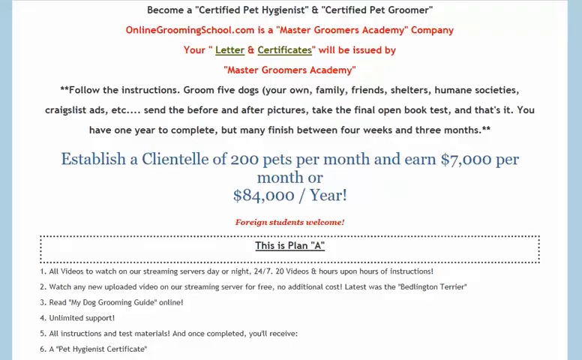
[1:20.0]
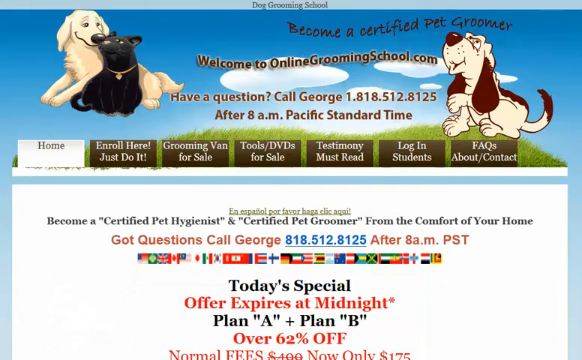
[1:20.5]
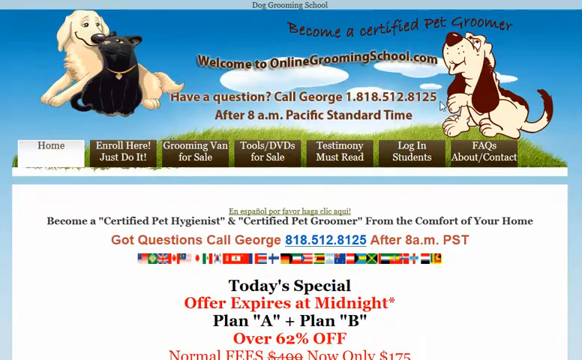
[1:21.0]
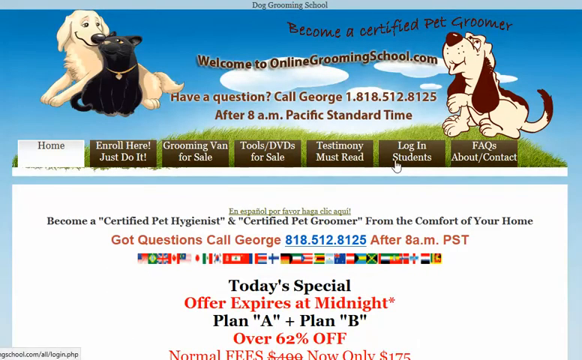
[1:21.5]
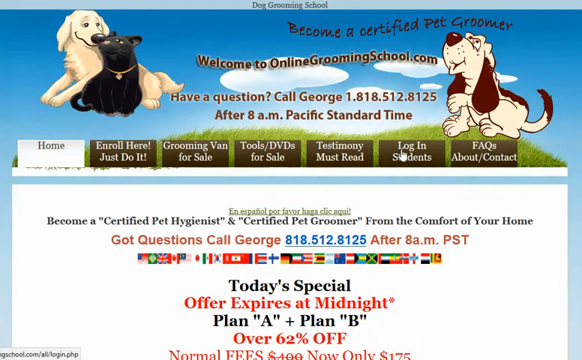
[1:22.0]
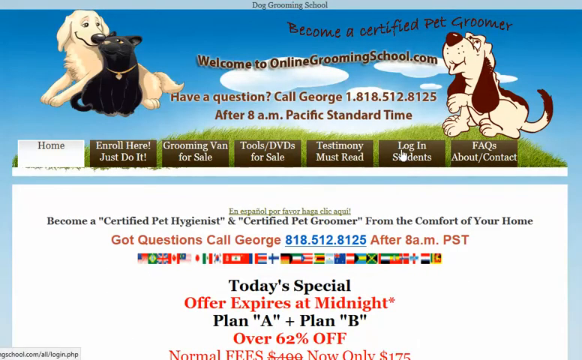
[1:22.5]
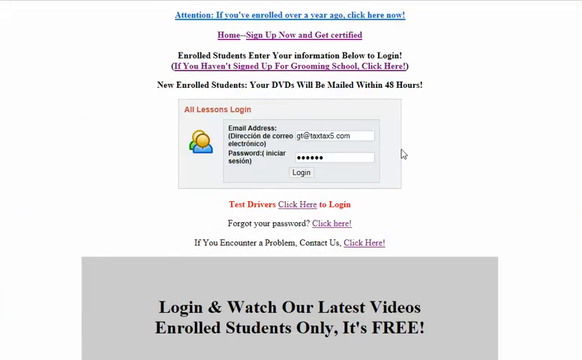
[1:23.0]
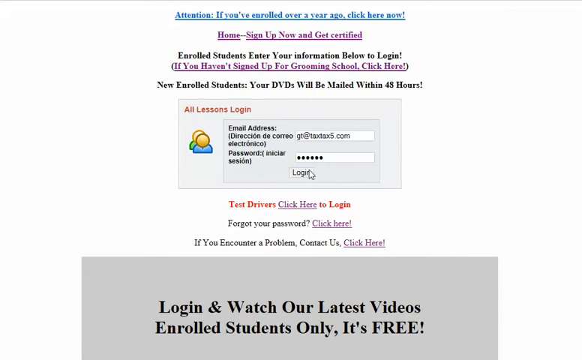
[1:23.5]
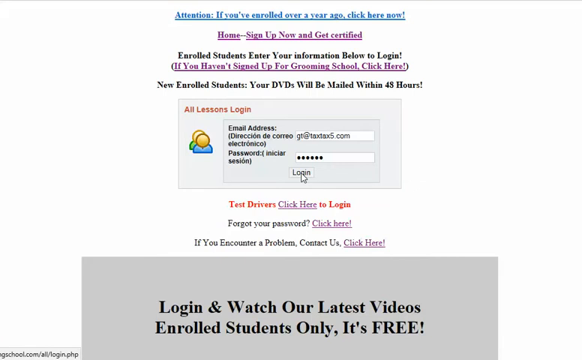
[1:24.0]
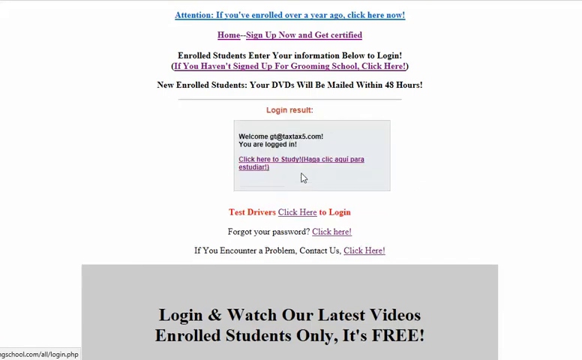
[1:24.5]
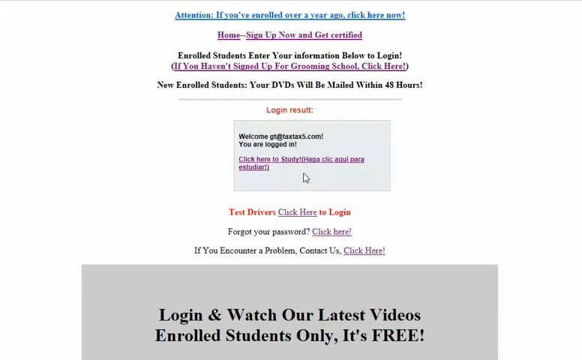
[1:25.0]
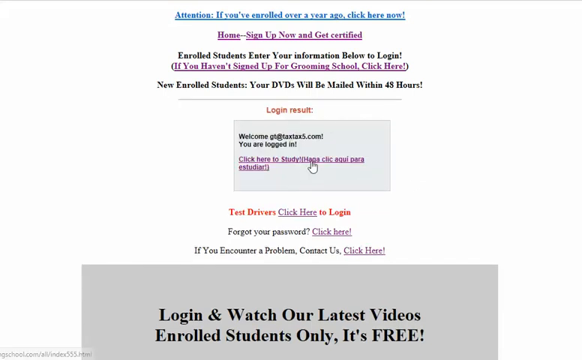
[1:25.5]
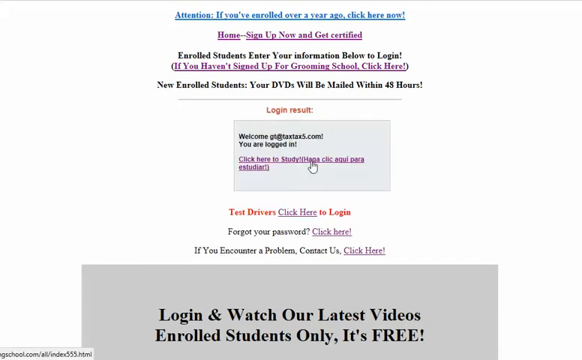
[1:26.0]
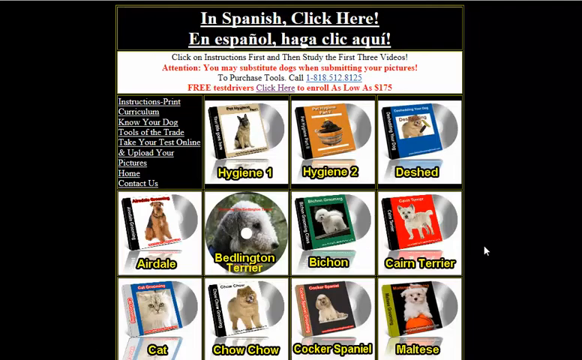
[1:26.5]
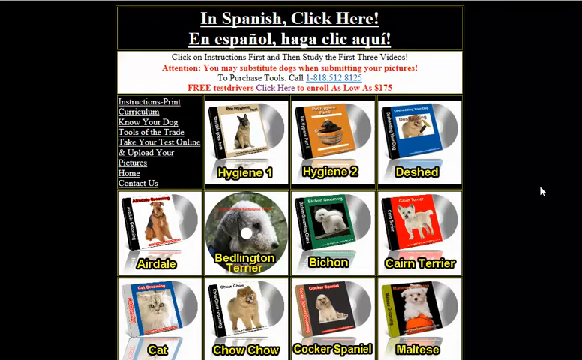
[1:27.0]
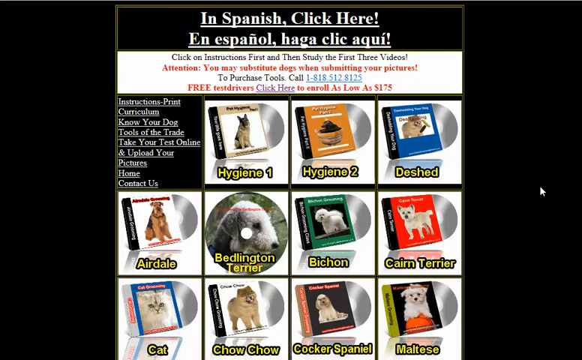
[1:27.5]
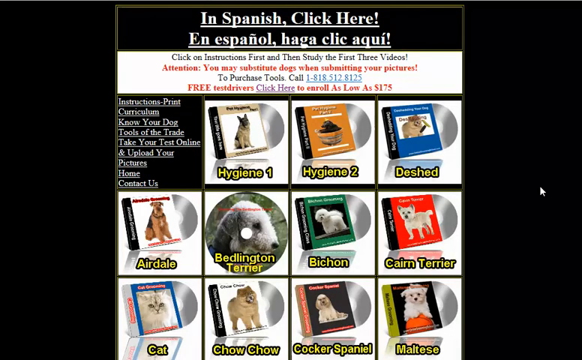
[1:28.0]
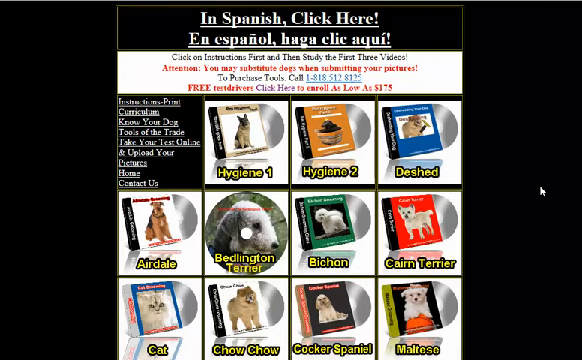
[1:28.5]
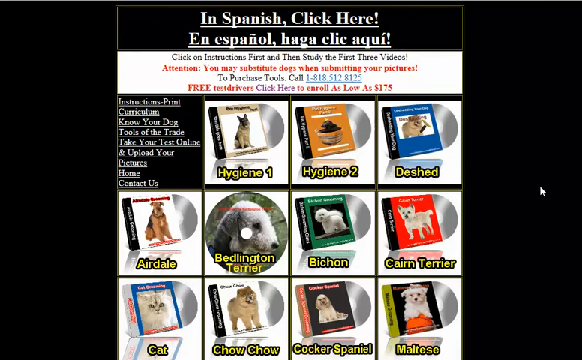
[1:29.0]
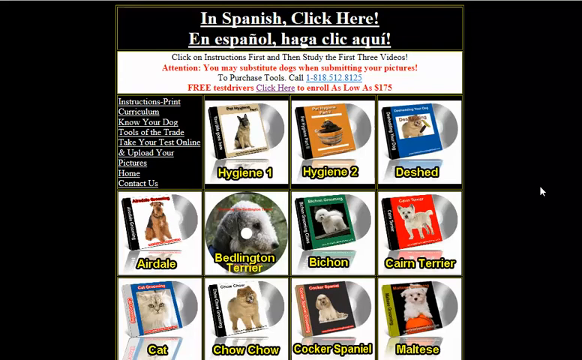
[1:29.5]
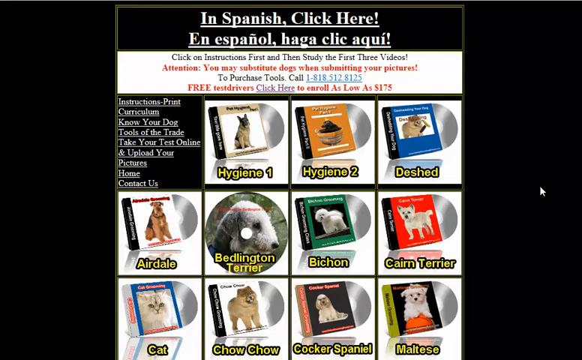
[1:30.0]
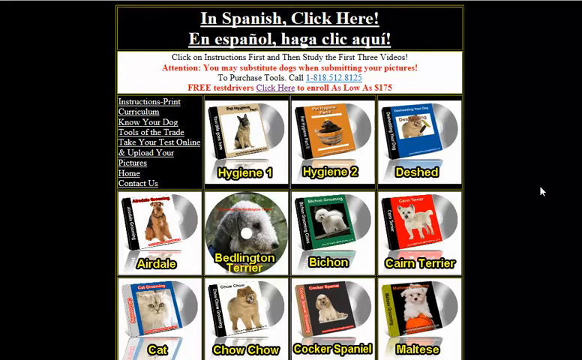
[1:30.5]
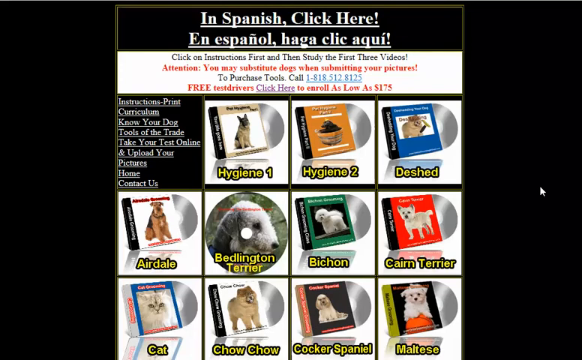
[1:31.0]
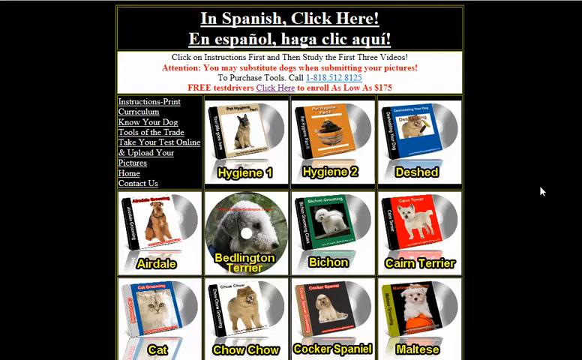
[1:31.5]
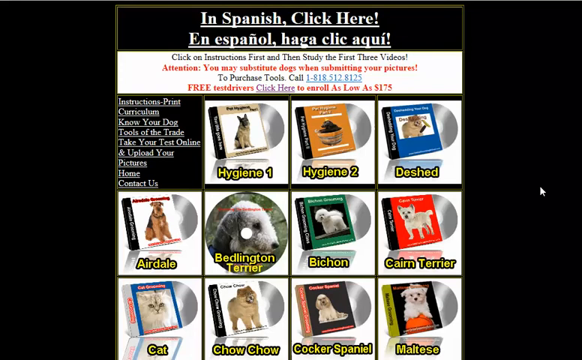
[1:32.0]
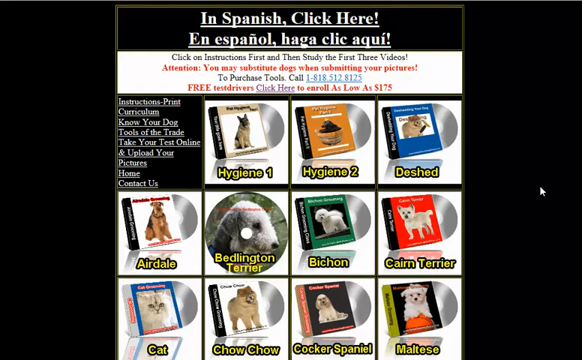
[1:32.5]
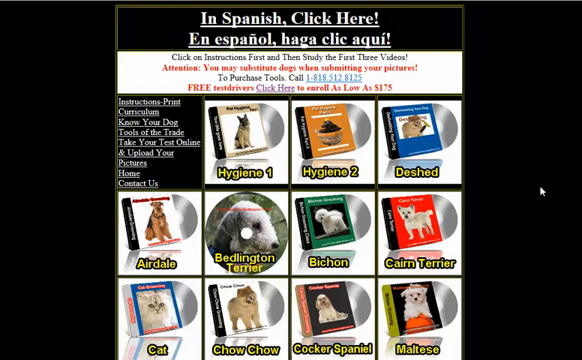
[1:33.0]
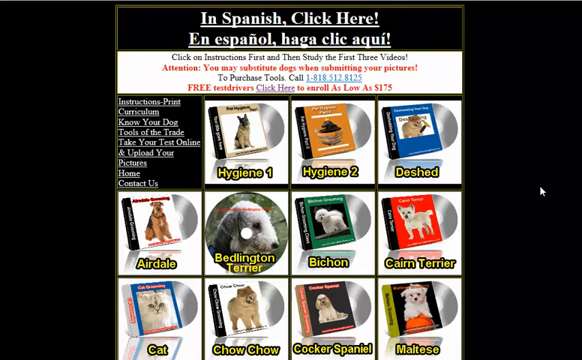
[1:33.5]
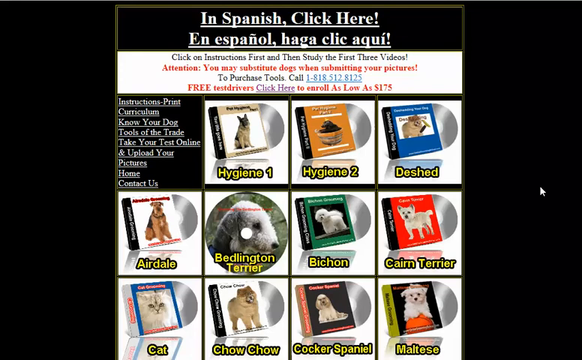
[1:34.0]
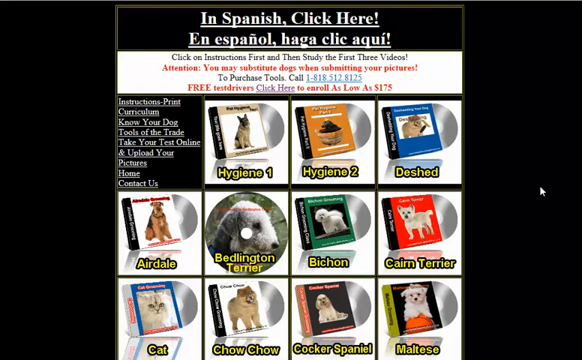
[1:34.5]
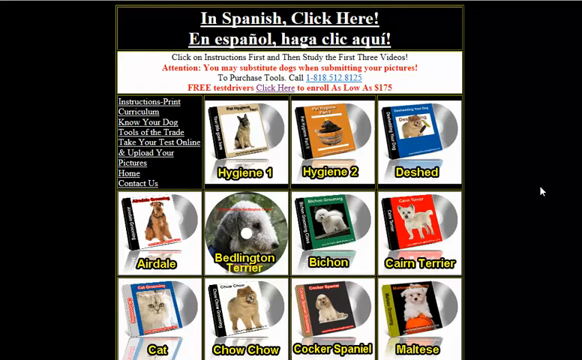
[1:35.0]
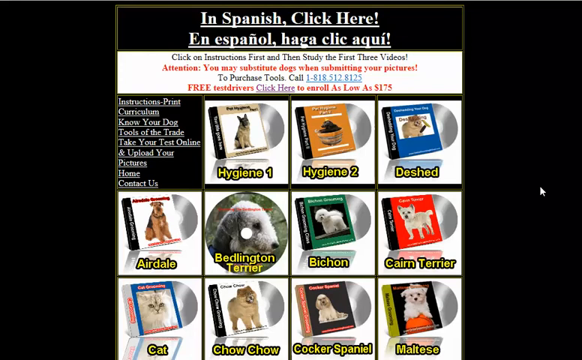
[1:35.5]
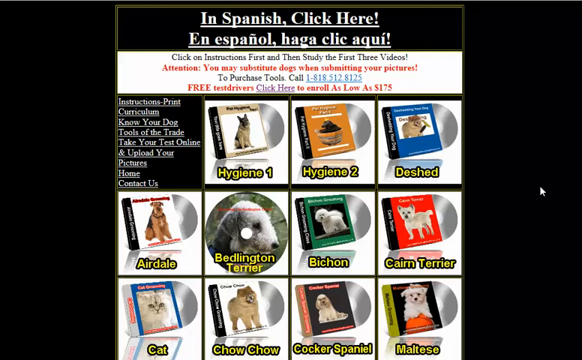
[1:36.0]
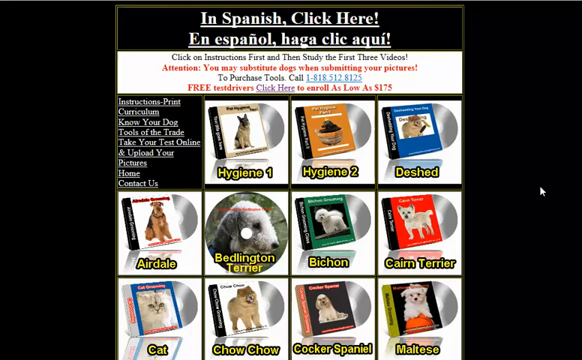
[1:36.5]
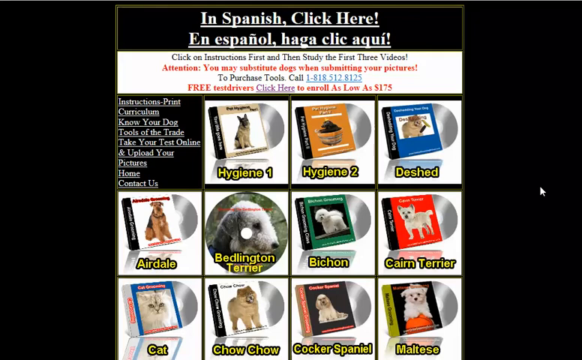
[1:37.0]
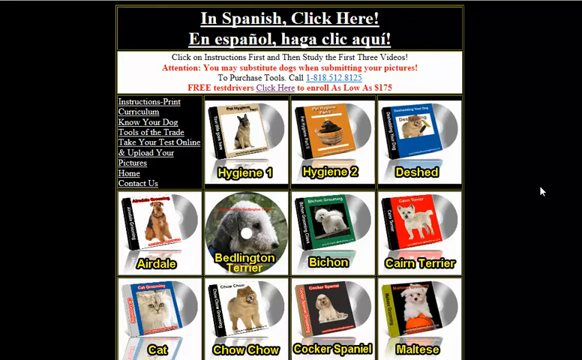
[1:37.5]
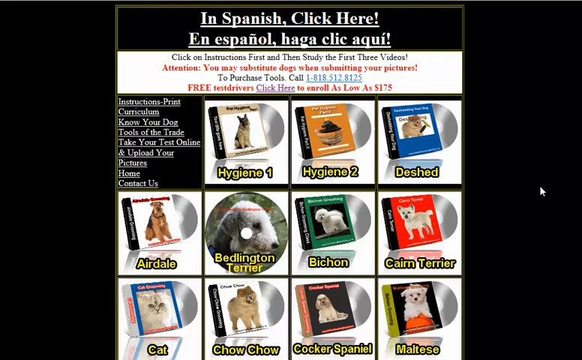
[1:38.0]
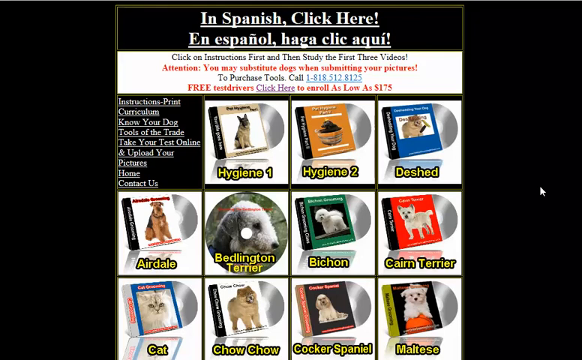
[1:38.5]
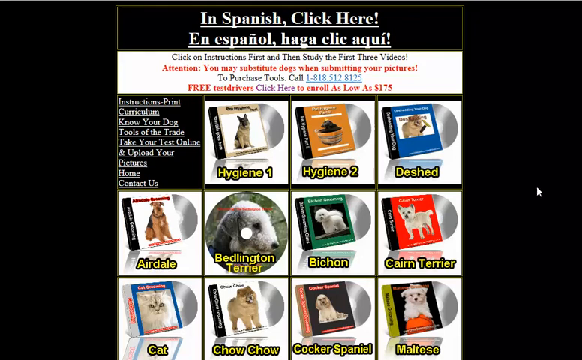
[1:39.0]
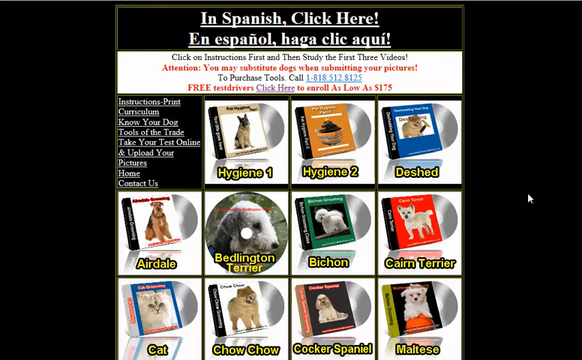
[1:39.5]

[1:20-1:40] The view returns to the top of the dog grooming school website, where the mouse hovers over the Login Students tab and clicks it. The page changes to the login page, for enrolled students only, to watch the latest videos. In blue at the top of the screen it says "attention if you've enrolled over a year ago click here now"; in purple, "home sign up now and get certified"; in black, "enroll students enter your information below to log in"; in purple, "if you haven't signed up for grooming school click here"; and text says "your dvds will be mailed within 48 hours". A login box has fields for email address and password. The mouse clicks on the password, a welcome box appears with "click here to study", and the mouse clicks it; both English and Spanish are visible. The page shows a series of discs: Hygiene 1, Hygiene 2, D-Shed, Airedale, Bedlington Terrier, Bichon, Cairn Terrier and more, with pictures of the dogs on the front of the DVDs. On the left-hand side is a list of subjects including instructions, print, curriculum, know your dog, tools of the trade, take your test online and upload your pictures, home, and contact us.